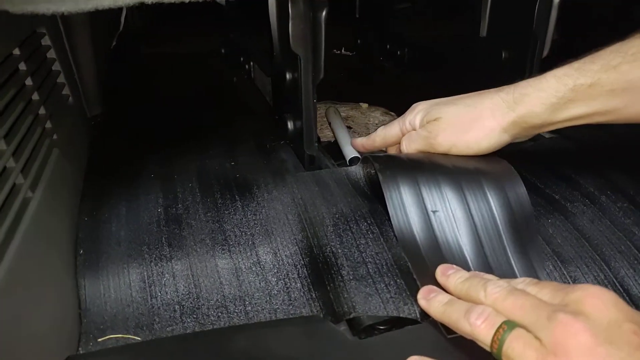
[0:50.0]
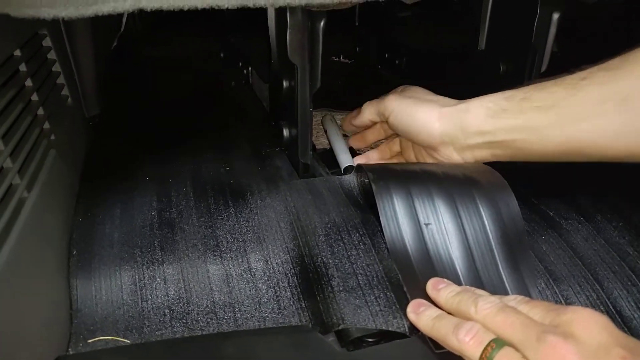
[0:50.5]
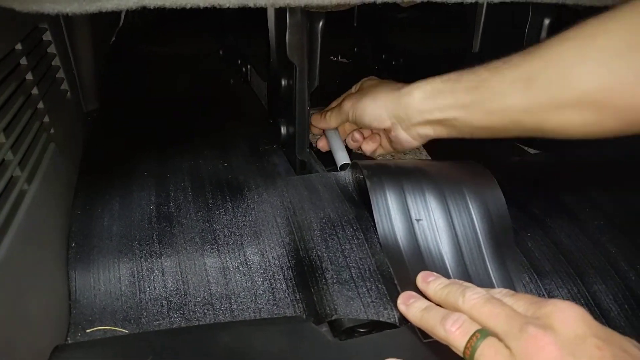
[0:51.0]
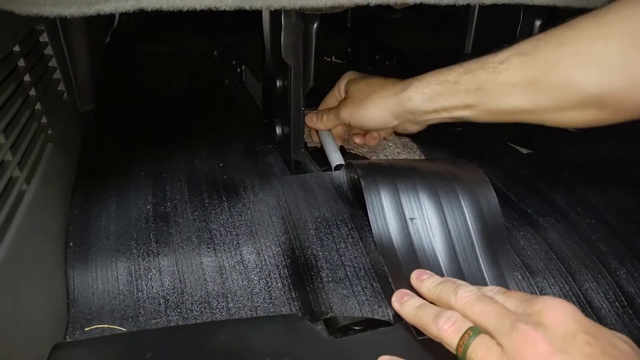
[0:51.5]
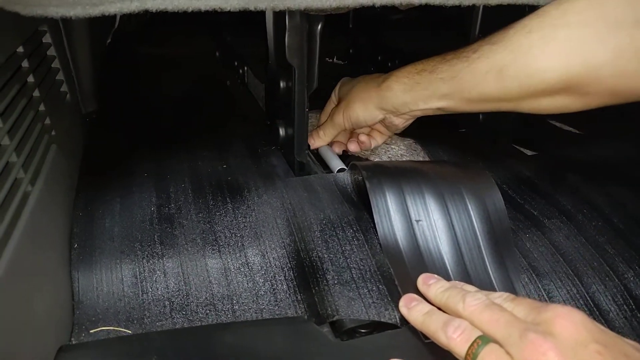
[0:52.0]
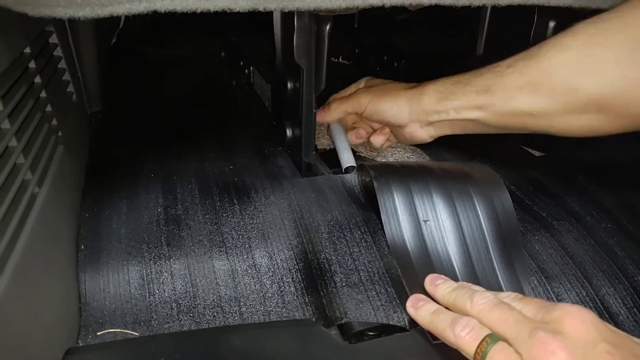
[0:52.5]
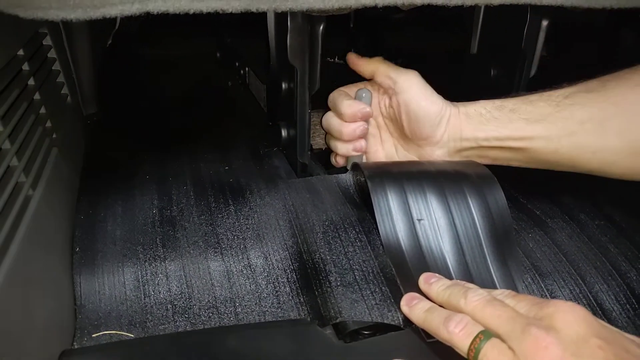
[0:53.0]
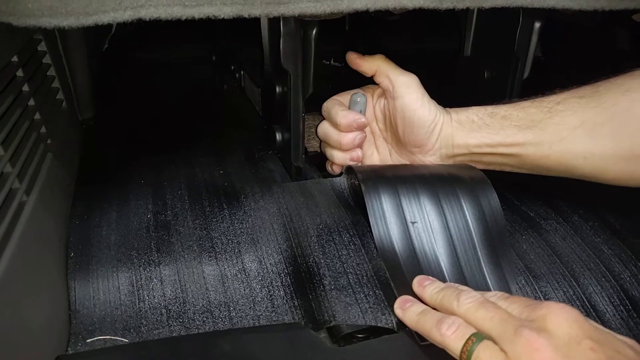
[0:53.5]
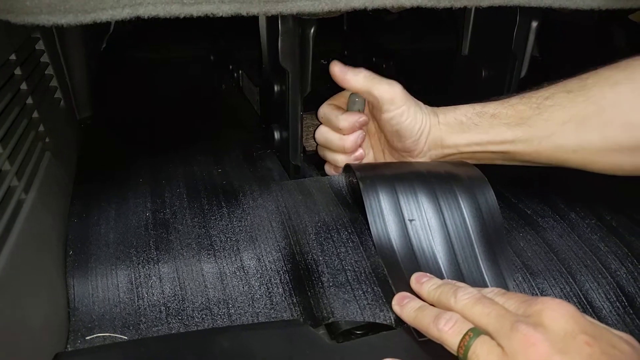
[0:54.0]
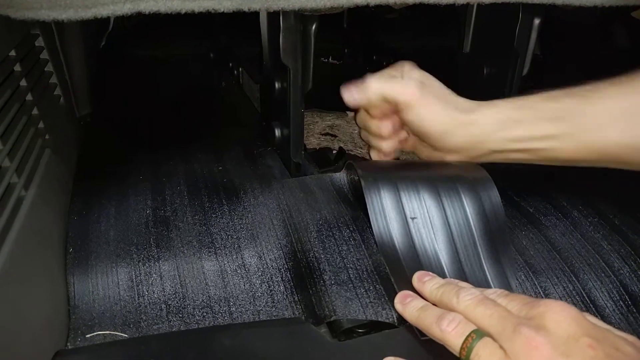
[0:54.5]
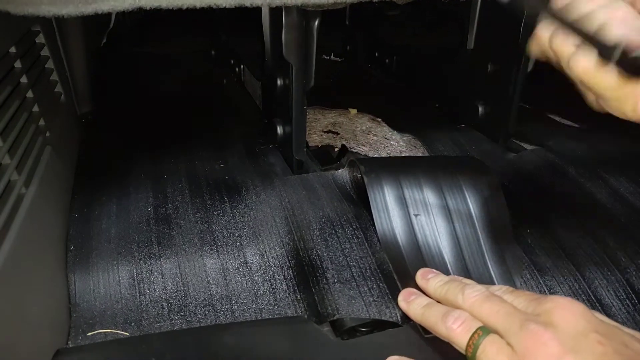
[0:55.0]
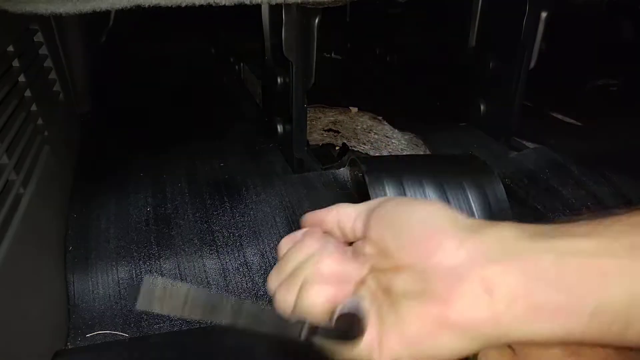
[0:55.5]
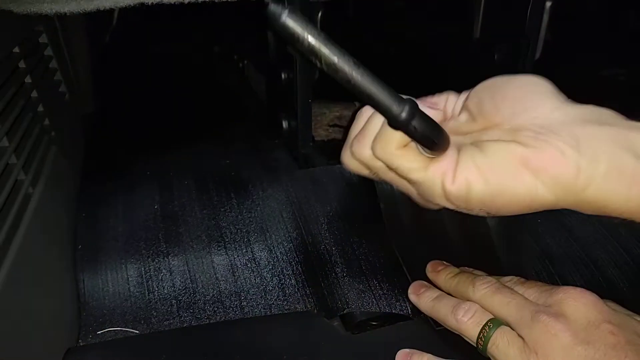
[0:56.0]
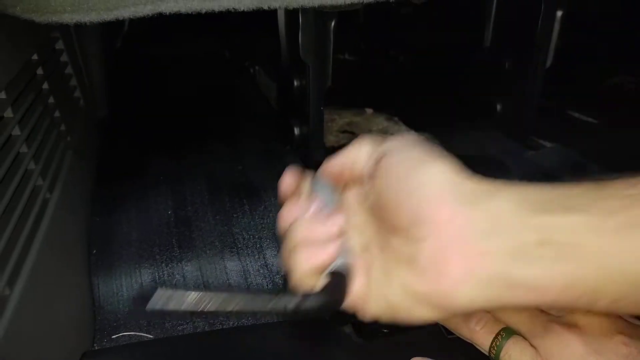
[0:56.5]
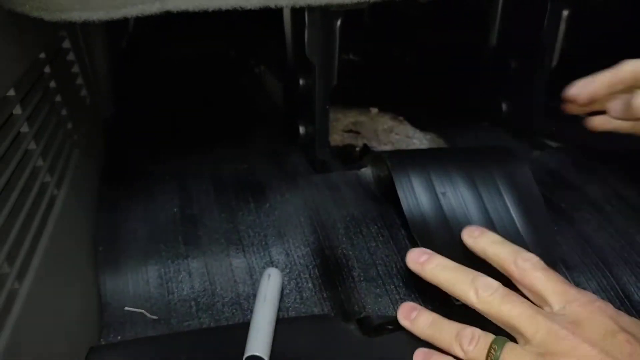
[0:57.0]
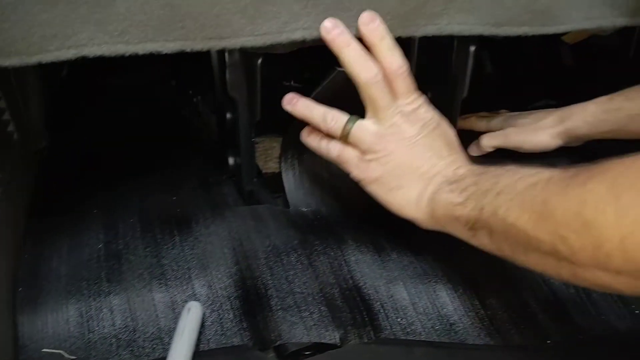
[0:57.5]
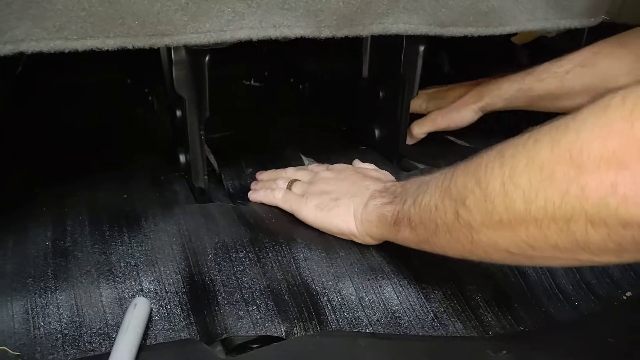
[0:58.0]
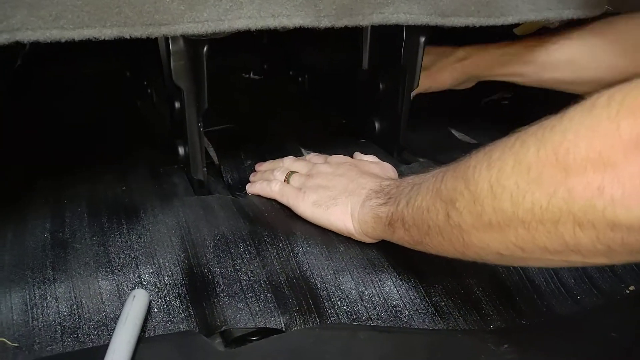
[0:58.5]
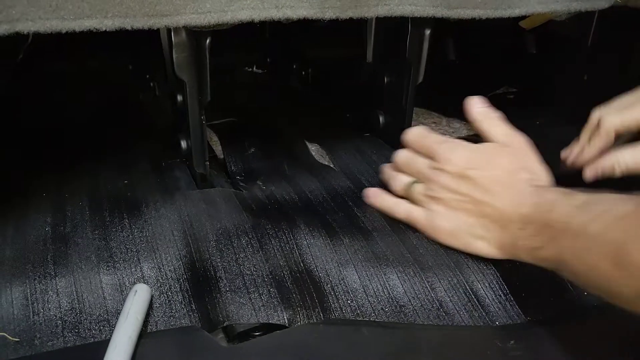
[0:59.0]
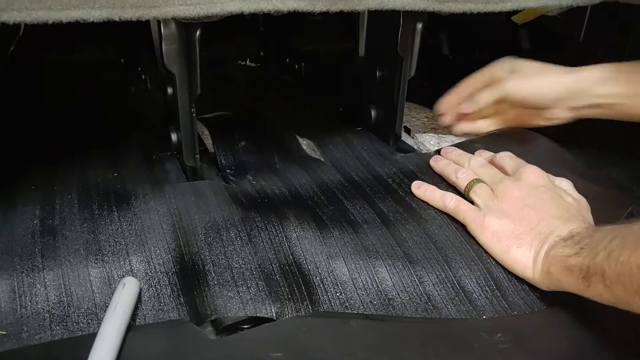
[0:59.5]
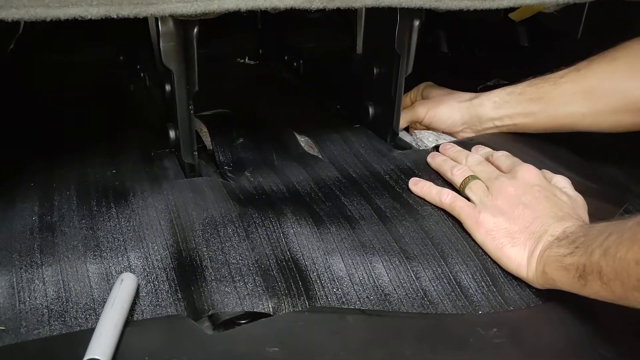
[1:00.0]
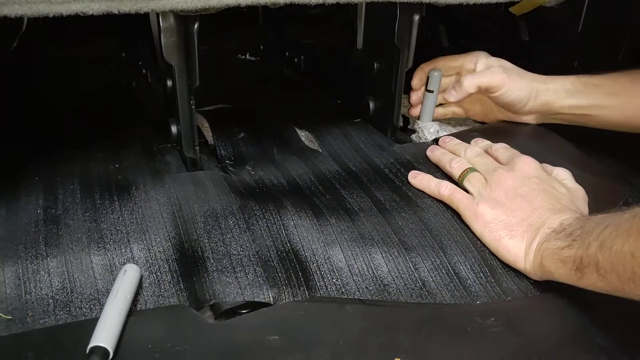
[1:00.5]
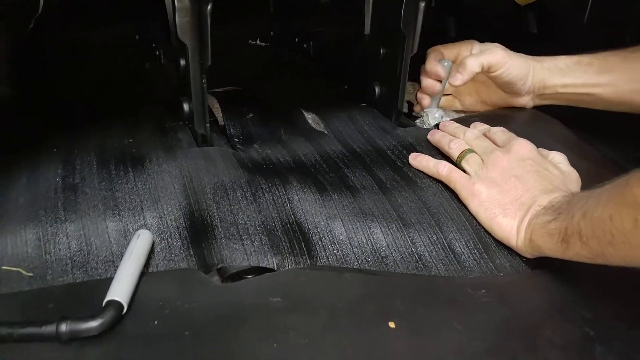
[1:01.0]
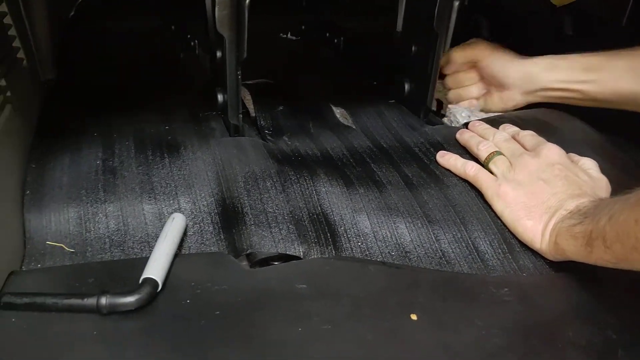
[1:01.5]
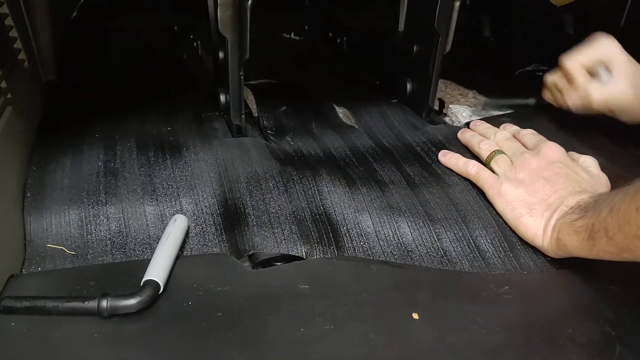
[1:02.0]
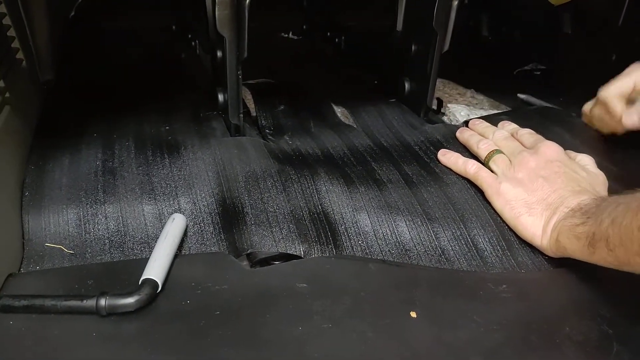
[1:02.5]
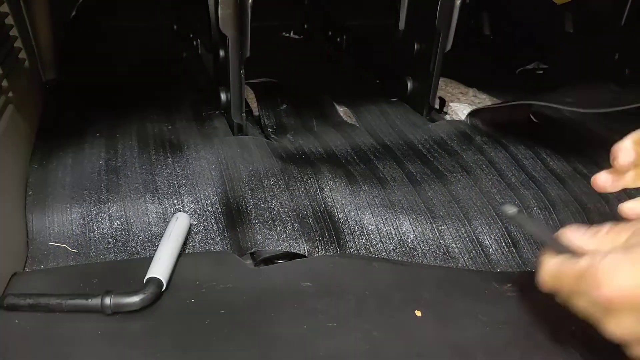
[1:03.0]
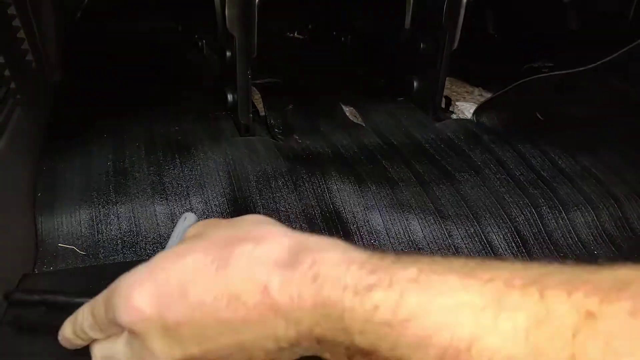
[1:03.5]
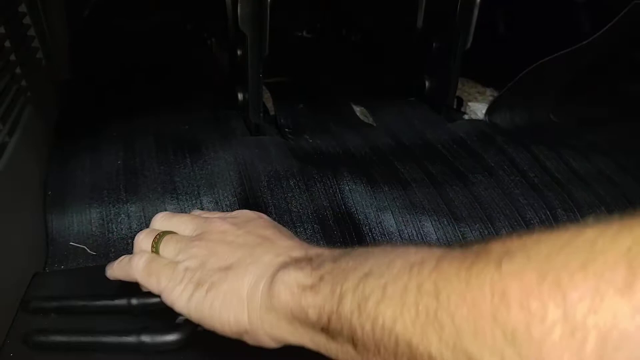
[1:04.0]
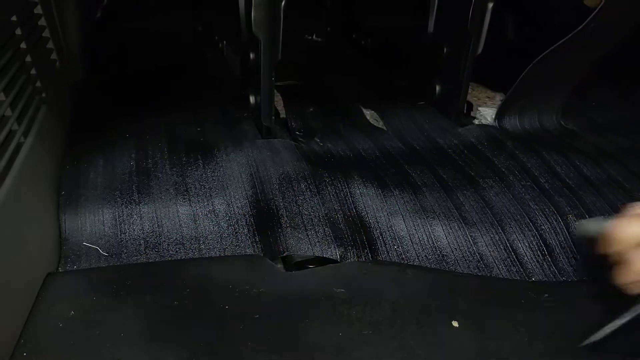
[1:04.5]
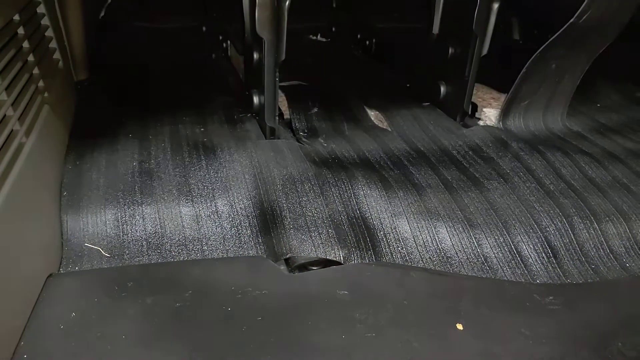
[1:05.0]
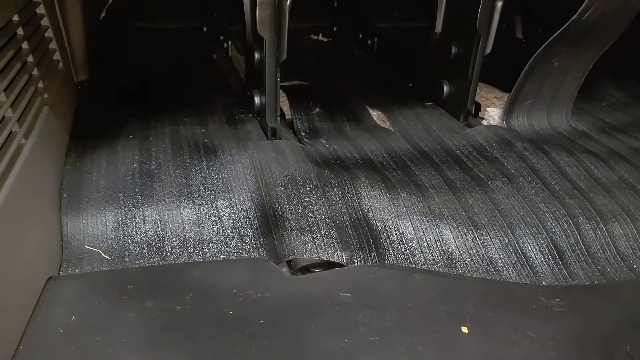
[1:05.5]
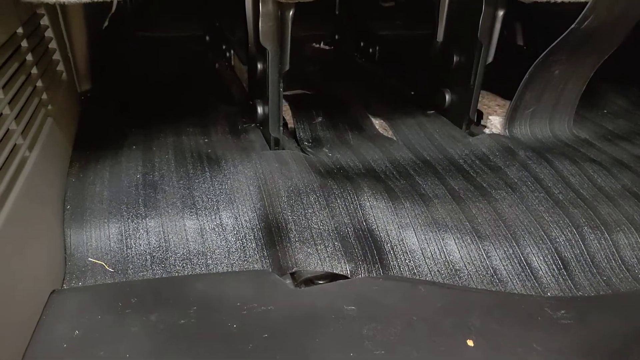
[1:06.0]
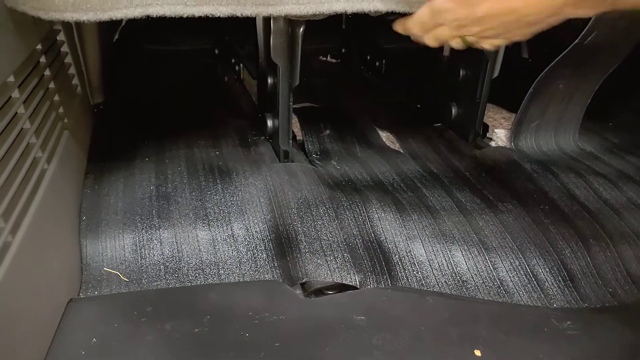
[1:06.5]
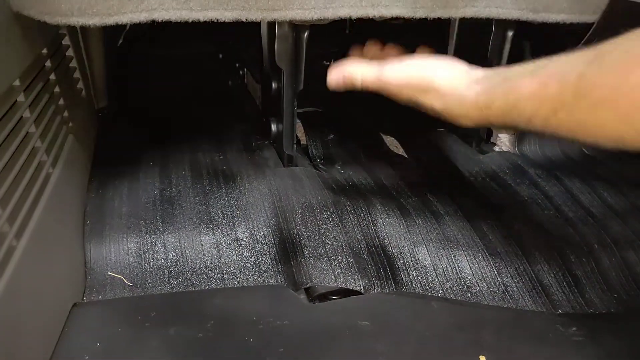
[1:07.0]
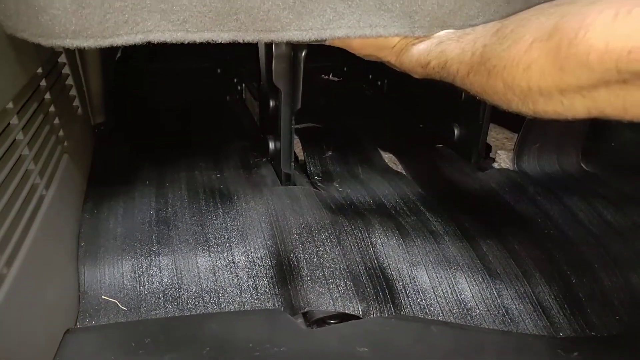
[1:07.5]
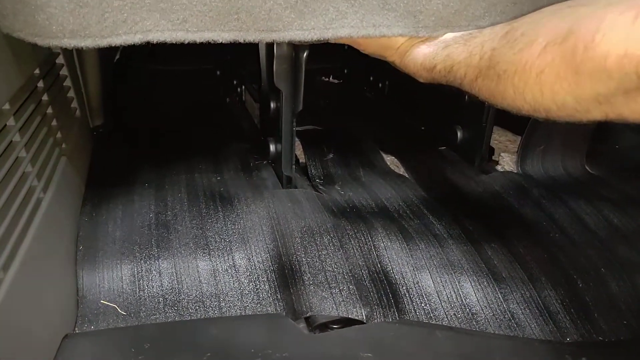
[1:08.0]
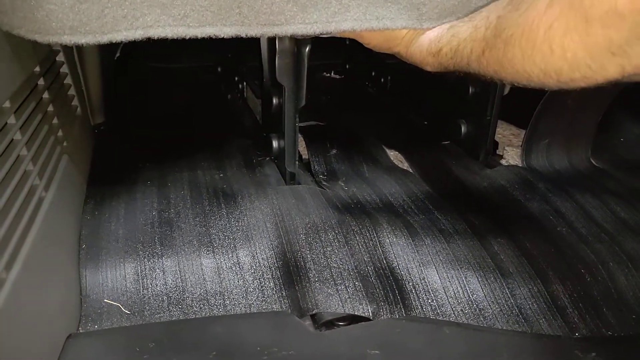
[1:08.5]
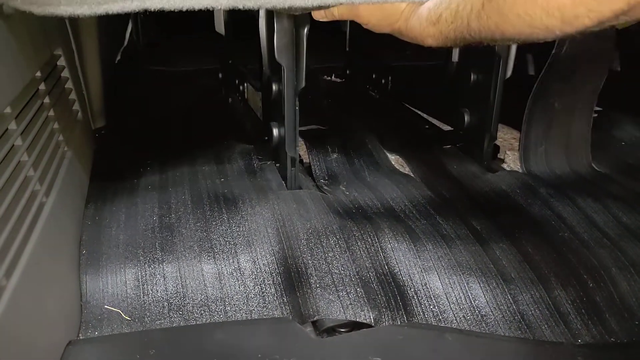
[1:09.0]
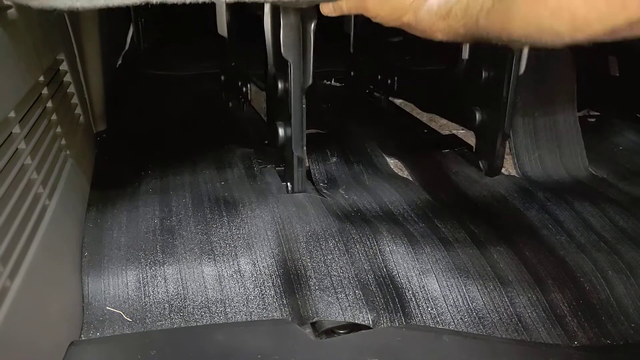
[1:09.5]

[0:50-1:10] Holding the strip of matting, approximately 5 or 6 inches in diameter, with their left hand, the person reaches in to the uncovered tube. They grasp it with their right hand, pull it upwards and then towards them, and withdraw the piece of metal by pulling it to the right, then remove it. They bring it towards the camera and show it. They push the matting back down, move their hand to the right-hand side of the central seat, hold down the floor matting with their left hand and grasp a similar piece of metal with their right hand, repeating the action: pulling it up and towards the rear of the vehicle, then withdrawing it by pulling to the right. They move that piece of metal out of shot. They then grasp the underneath of what turns out to be a seat with their left hand and remove it from the vehicle.